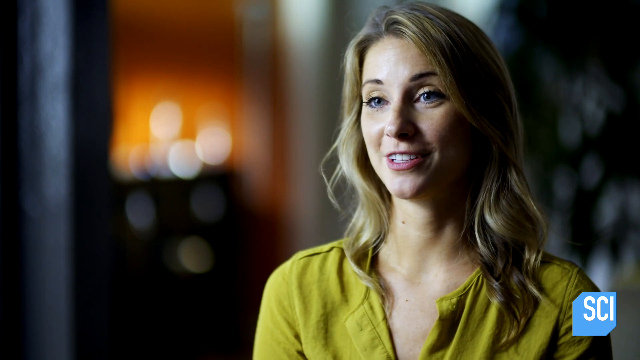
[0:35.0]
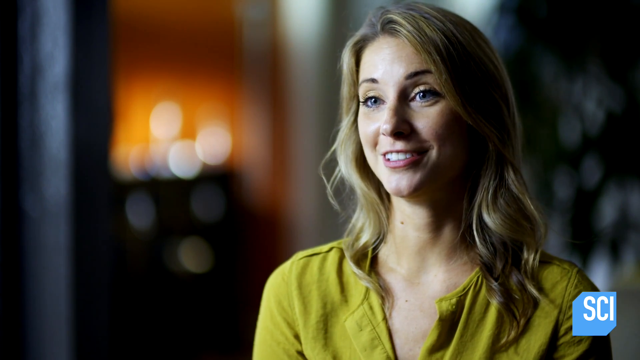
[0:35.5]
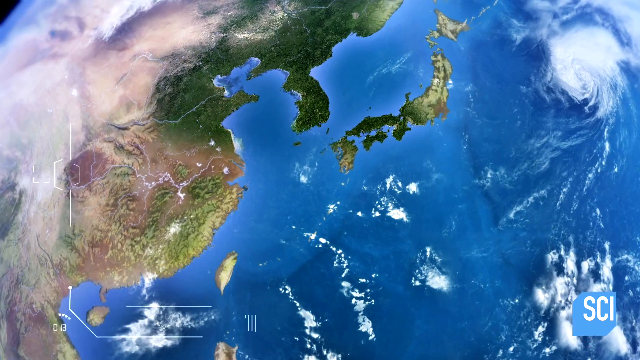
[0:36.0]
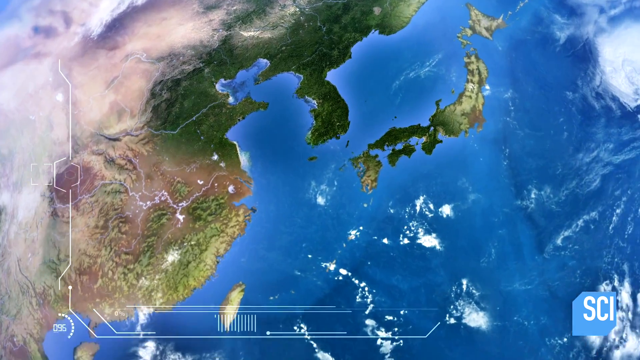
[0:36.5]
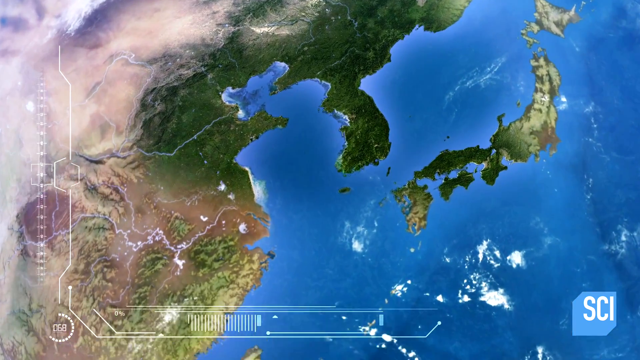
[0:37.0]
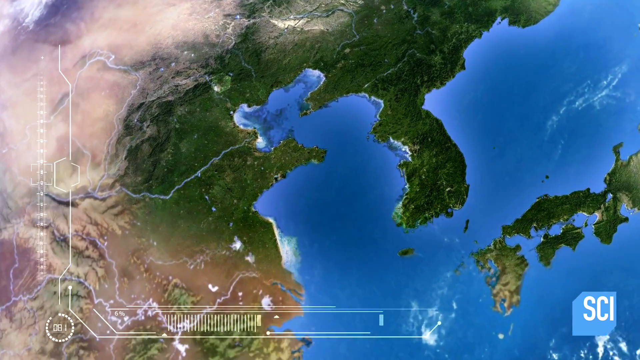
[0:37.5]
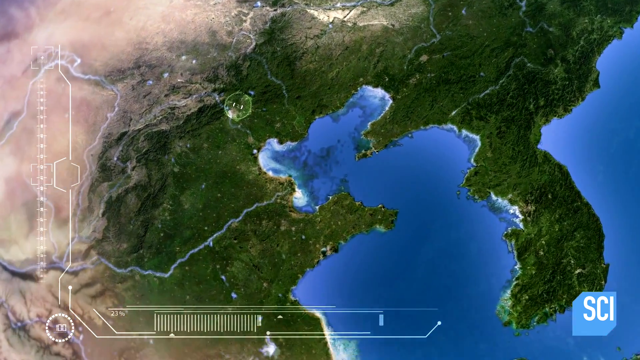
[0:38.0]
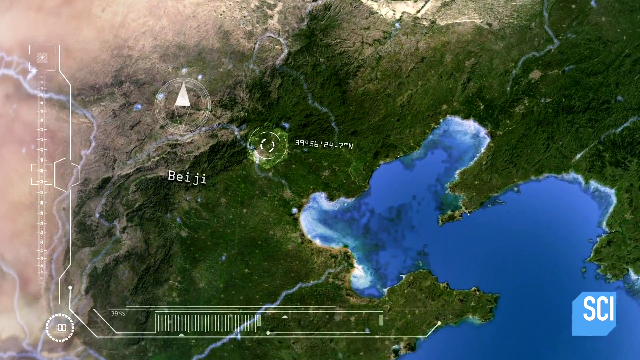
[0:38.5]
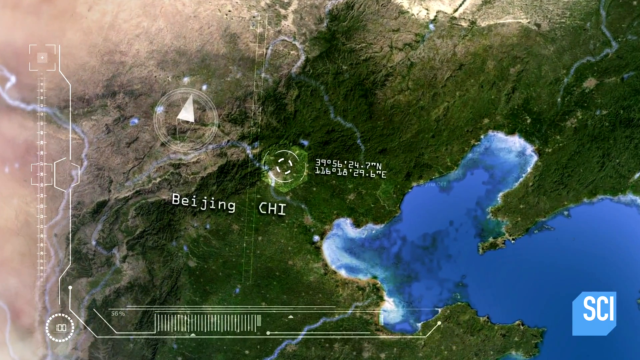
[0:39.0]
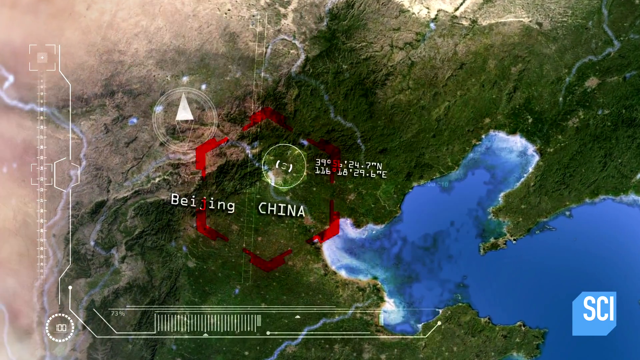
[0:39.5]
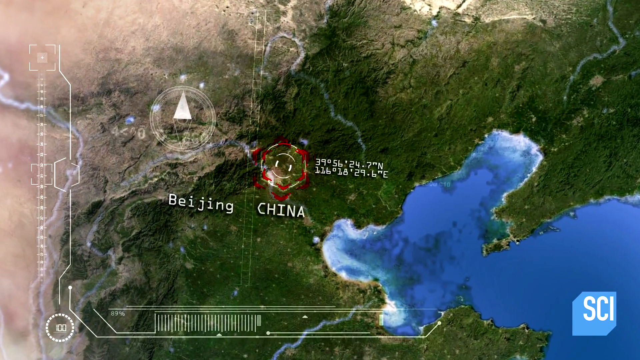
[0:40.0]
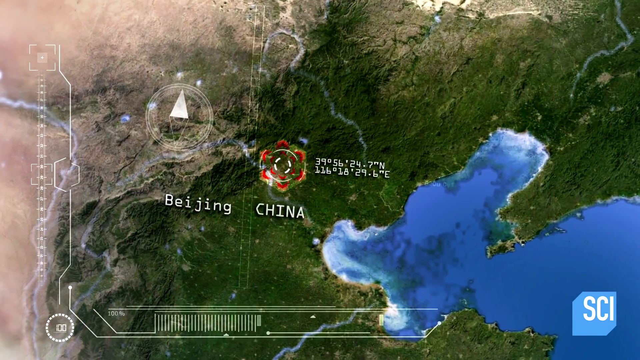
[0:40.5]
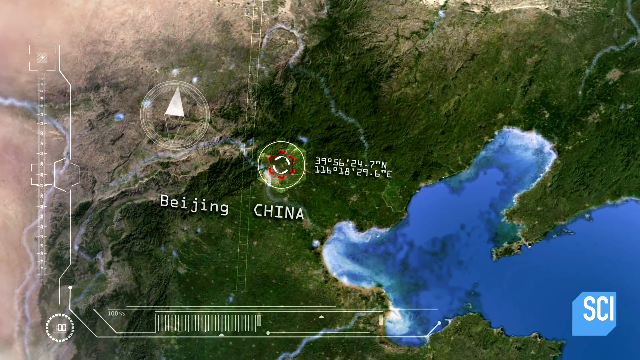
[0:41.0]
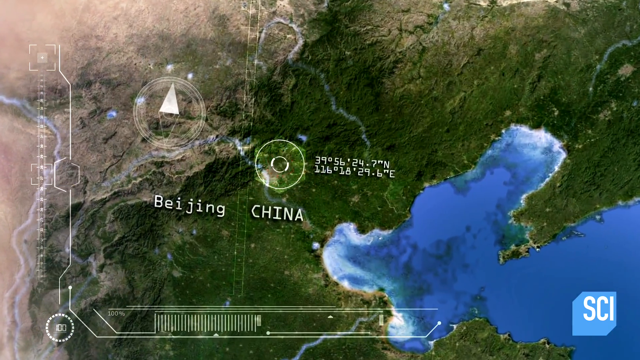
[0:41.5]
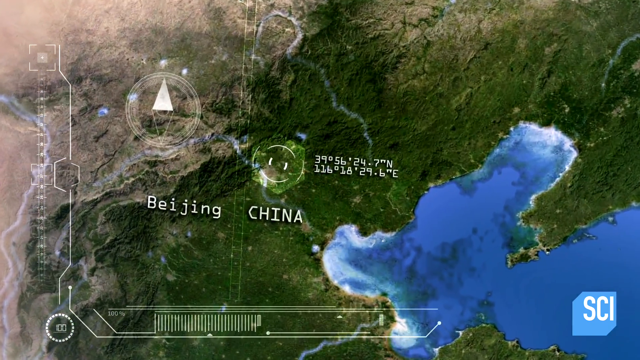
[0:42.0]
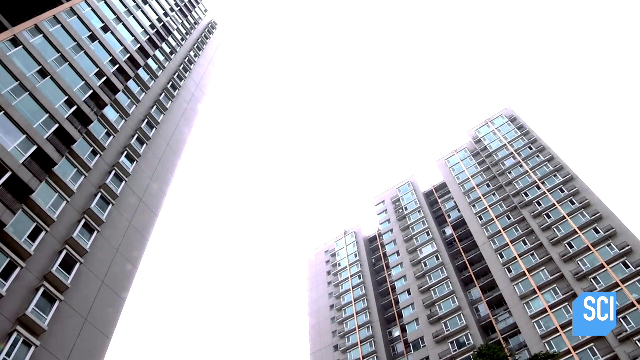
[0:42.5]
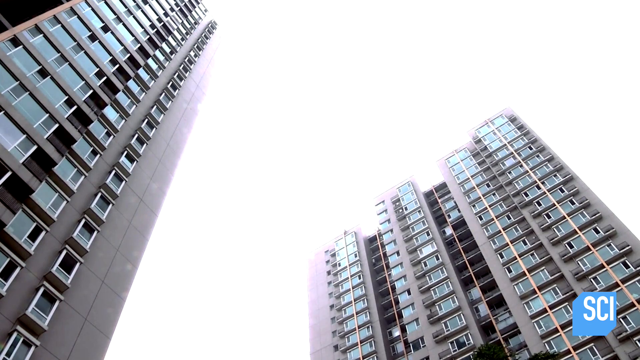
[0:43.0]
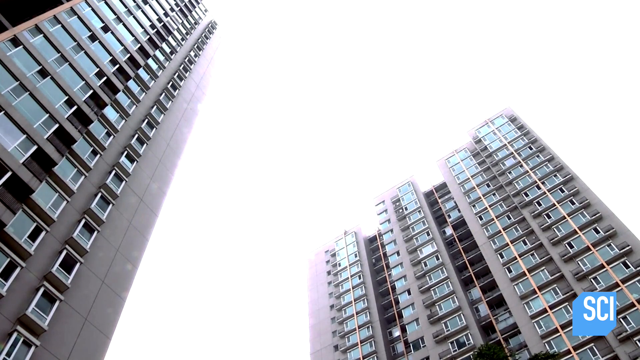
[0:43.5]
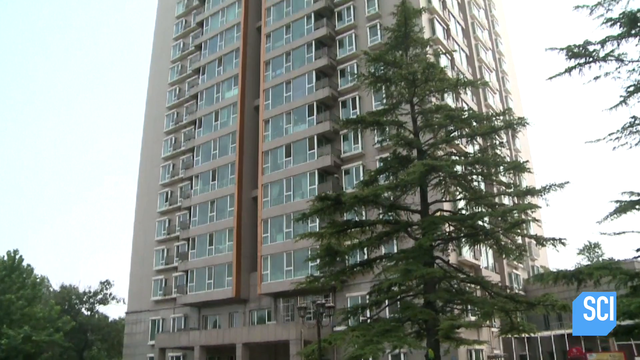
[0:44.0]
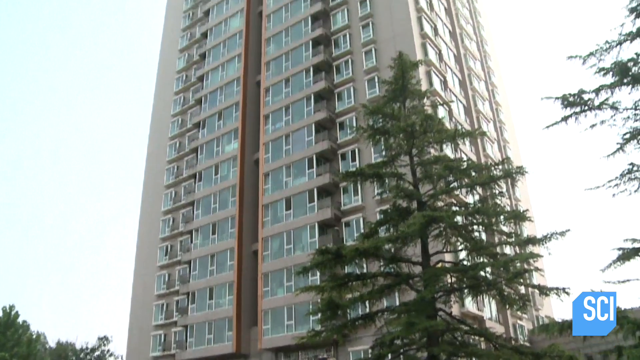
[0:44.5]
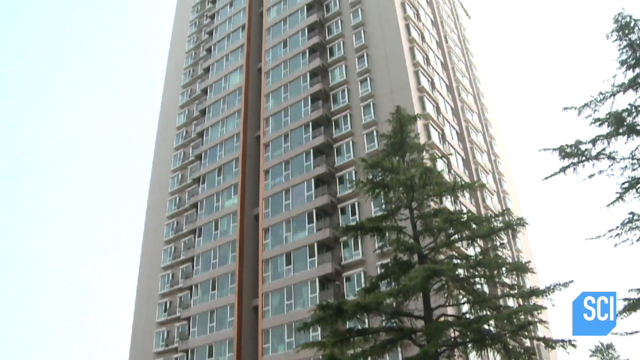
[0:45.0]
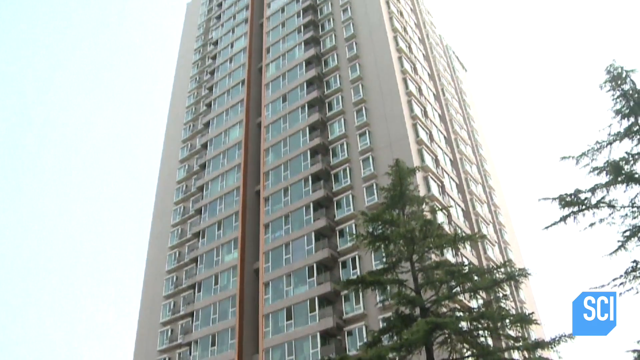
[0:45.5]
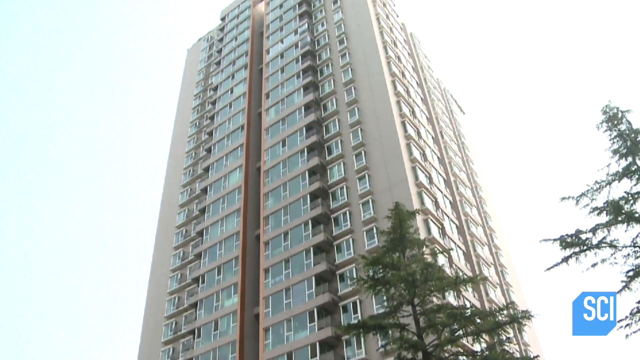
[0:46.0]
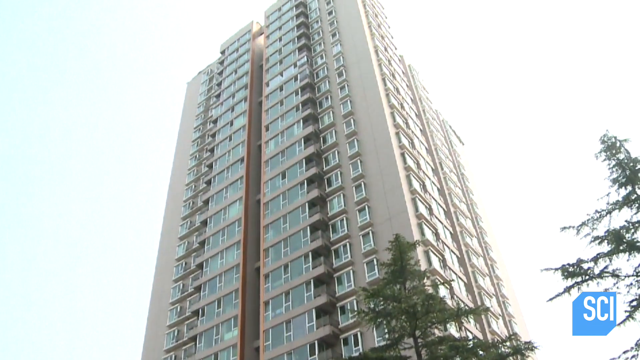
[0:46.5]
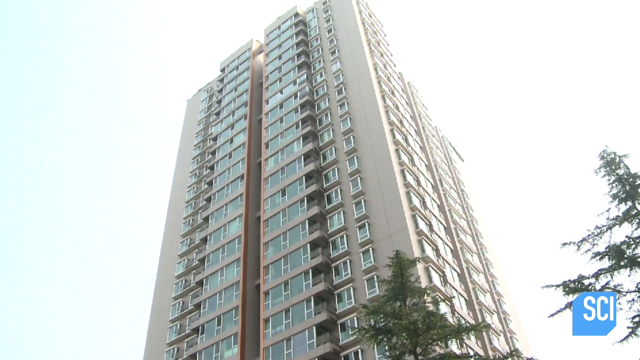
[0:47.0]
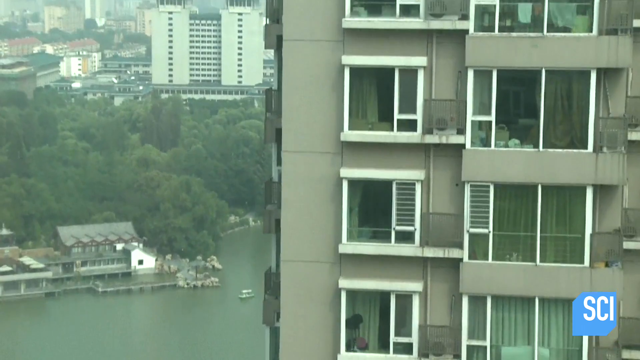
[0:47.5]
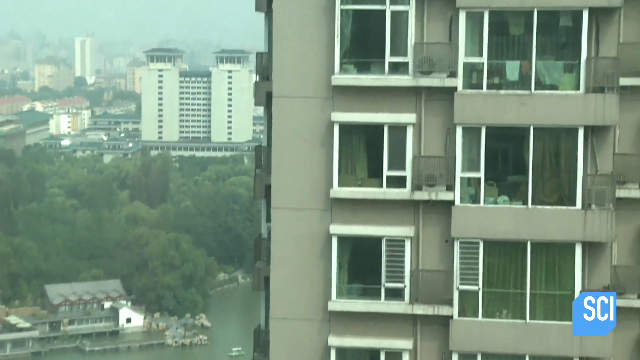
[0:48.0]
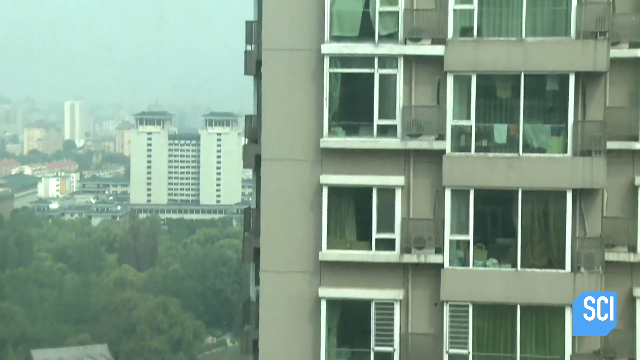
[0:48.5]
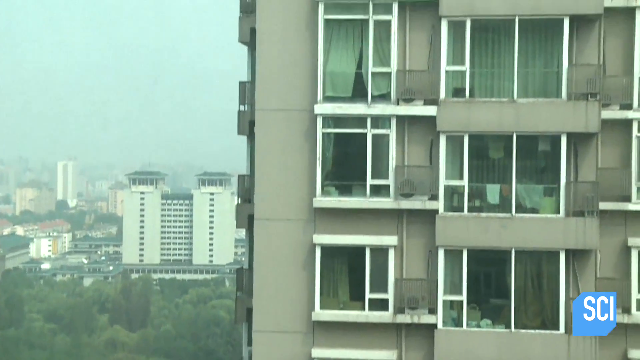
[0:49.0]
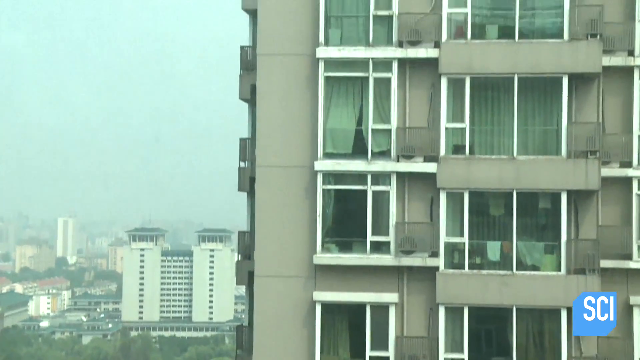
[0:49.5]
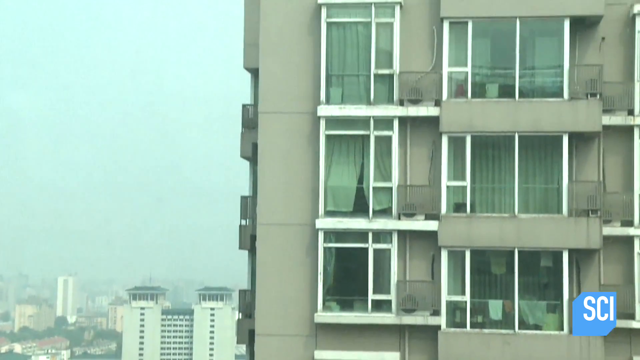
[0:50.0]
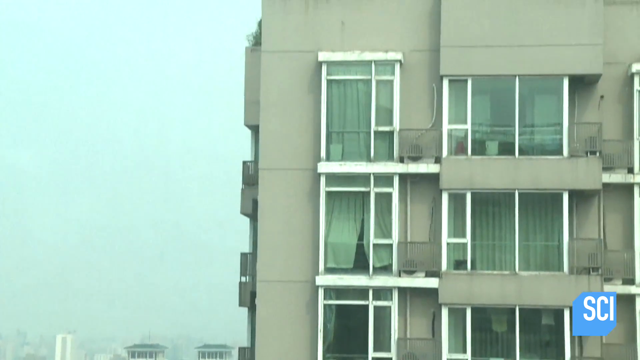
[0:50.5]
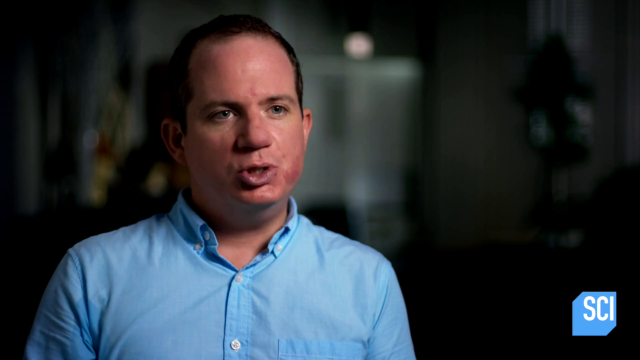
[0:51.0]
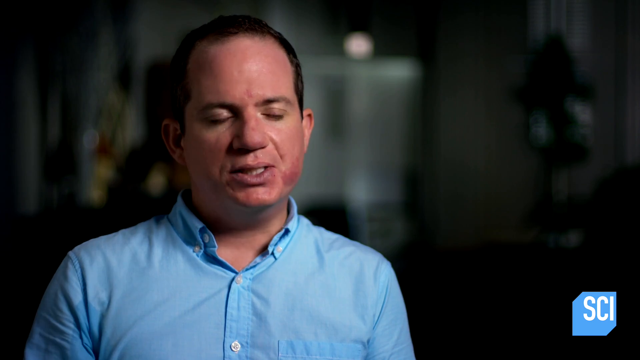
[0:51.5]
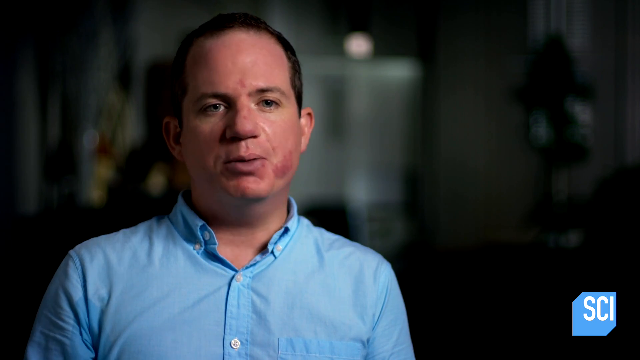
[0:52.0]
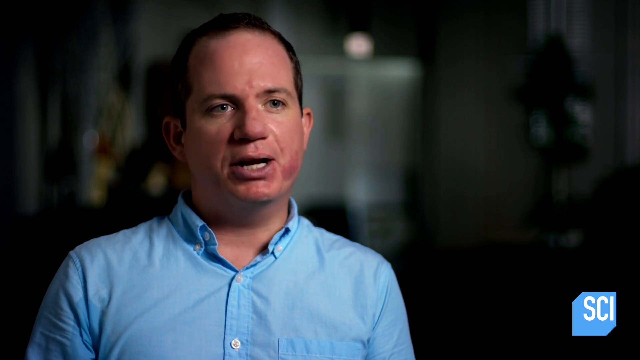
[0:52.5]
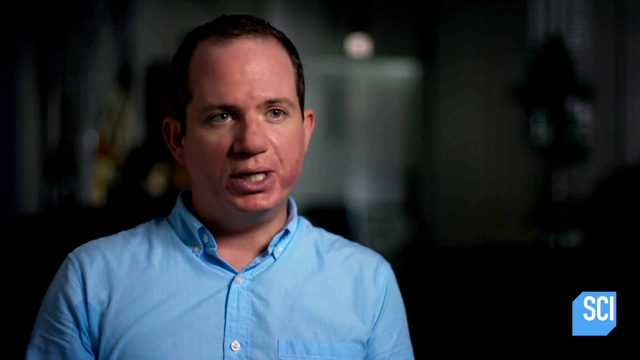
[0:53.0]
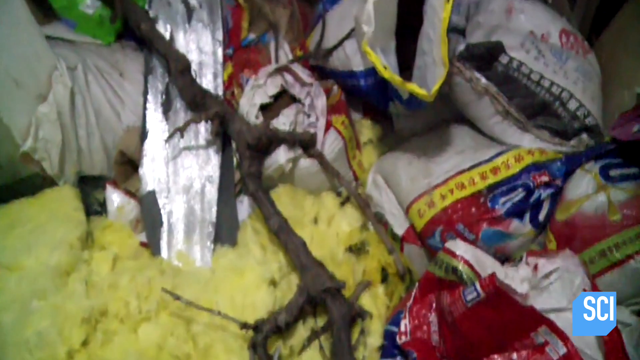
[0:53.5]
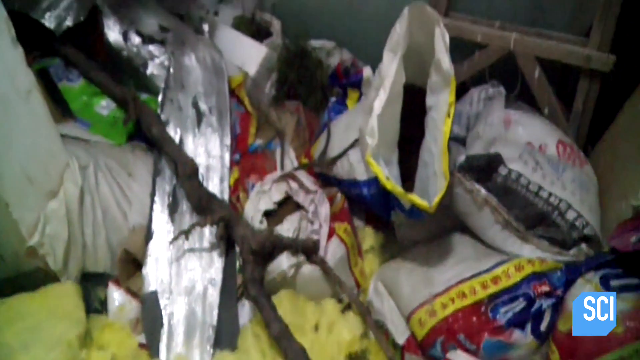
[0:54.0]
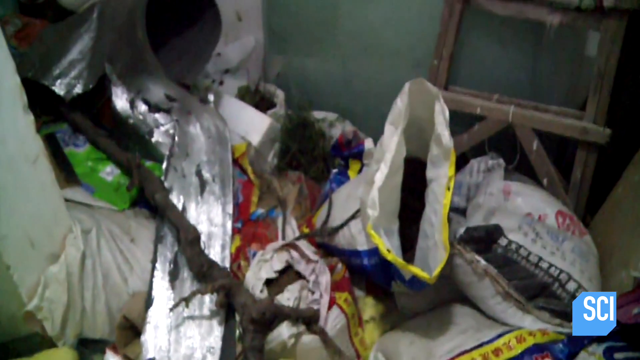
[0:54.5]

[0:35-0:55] The view zooms in on Beijing, China, and then on a large apartment building there. Several unidentified people are speaking. The building is seen from the ground, looking up: it seems very square and is gray, with either white or aluminum trim around the windows and doors, and most of the apartments look like they have balconies. The last picture shows bags that look like trash; it cannot be told whether they are at the top or the bottom of the building.